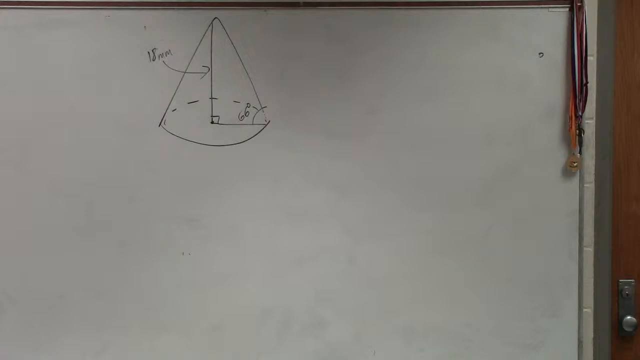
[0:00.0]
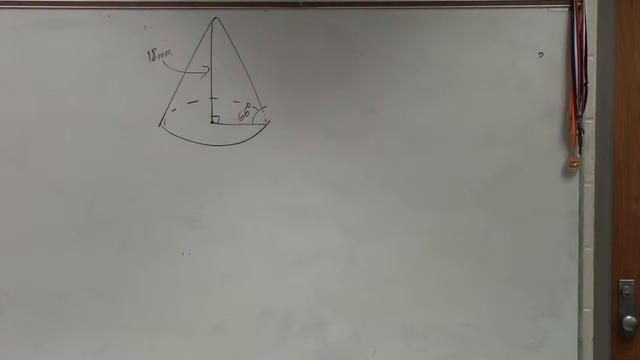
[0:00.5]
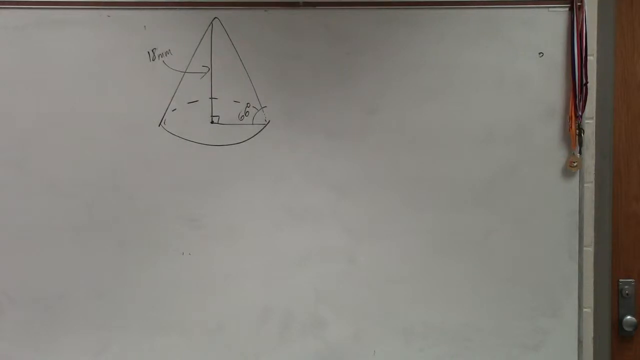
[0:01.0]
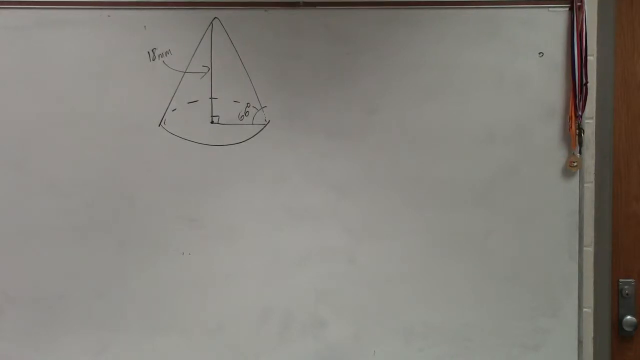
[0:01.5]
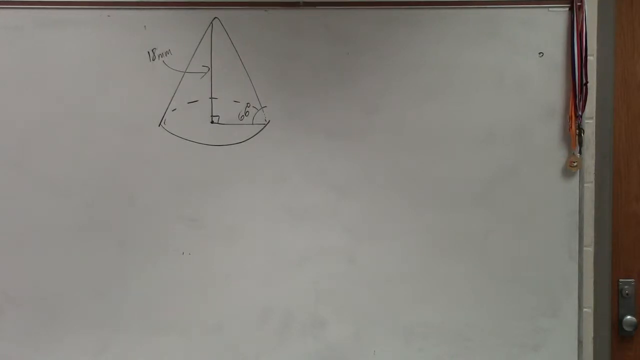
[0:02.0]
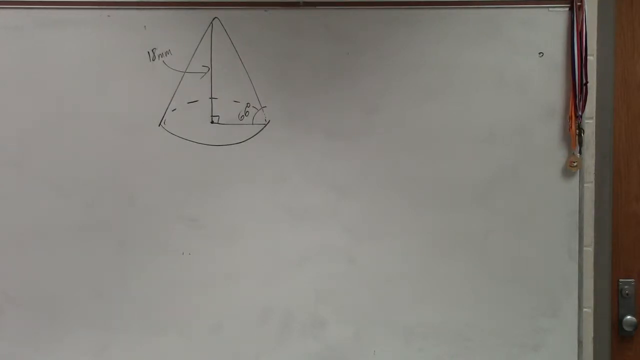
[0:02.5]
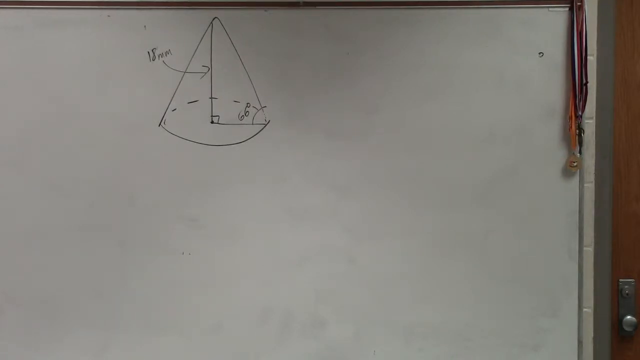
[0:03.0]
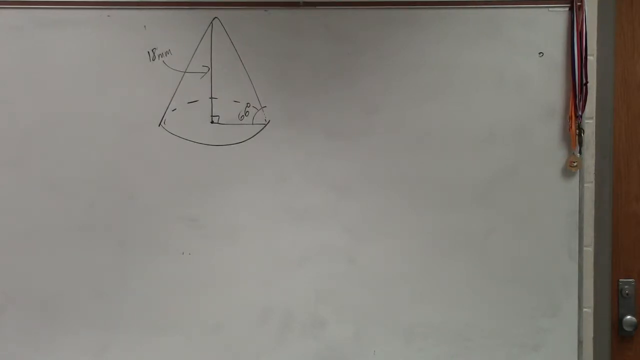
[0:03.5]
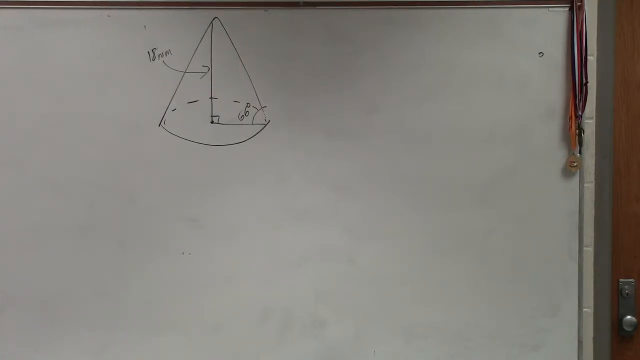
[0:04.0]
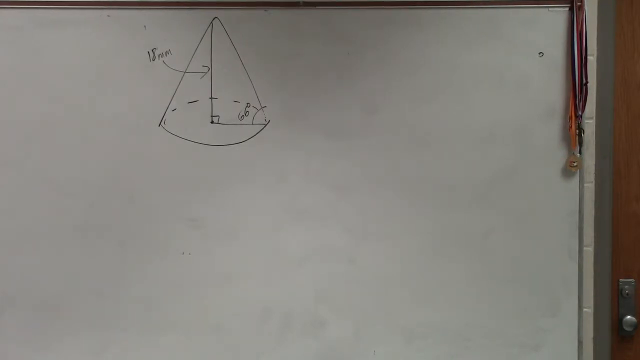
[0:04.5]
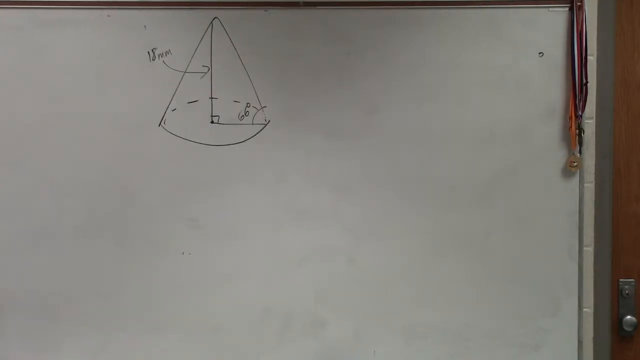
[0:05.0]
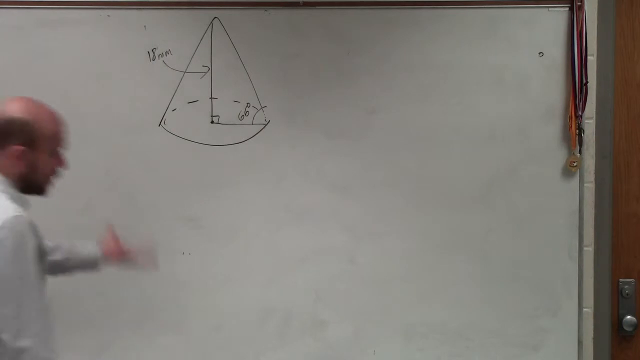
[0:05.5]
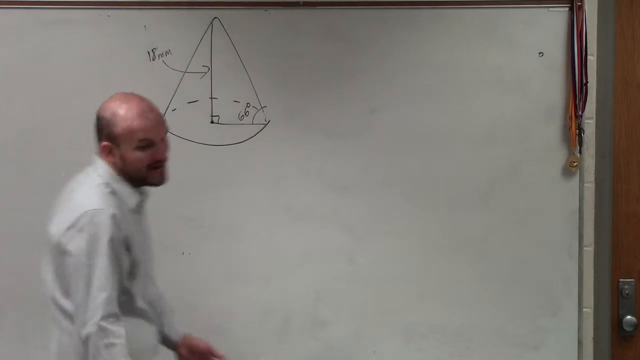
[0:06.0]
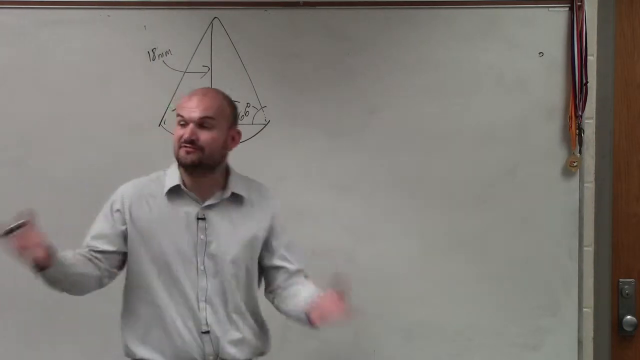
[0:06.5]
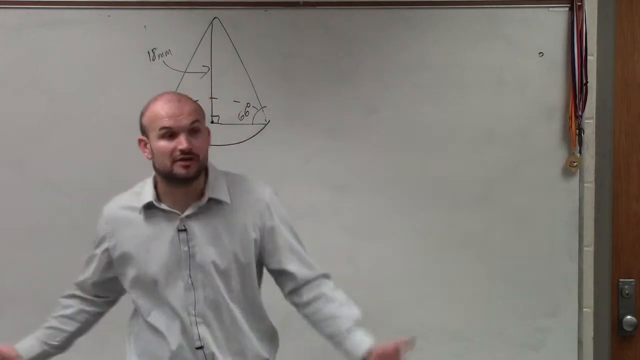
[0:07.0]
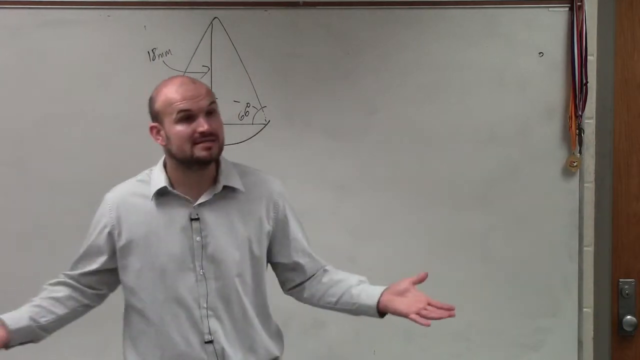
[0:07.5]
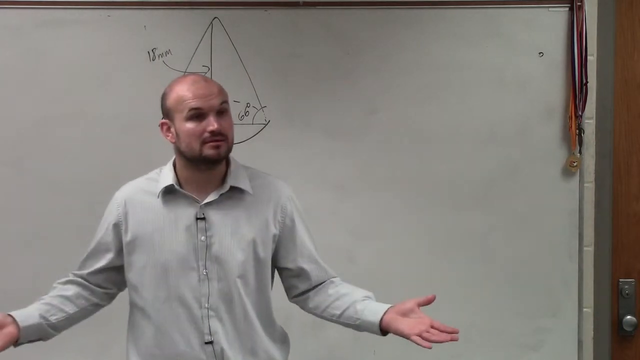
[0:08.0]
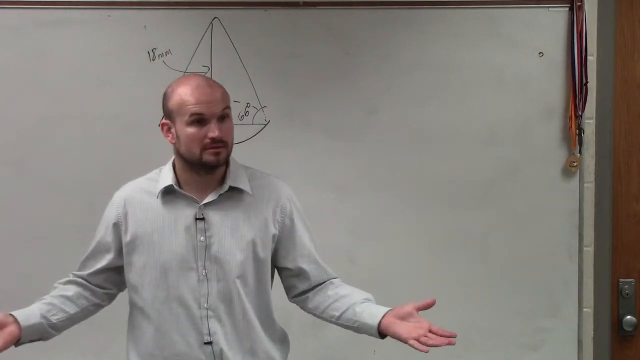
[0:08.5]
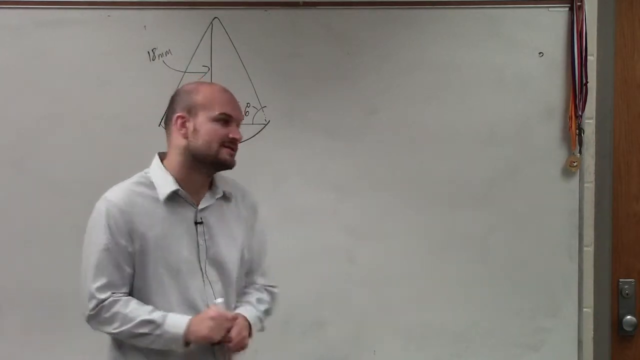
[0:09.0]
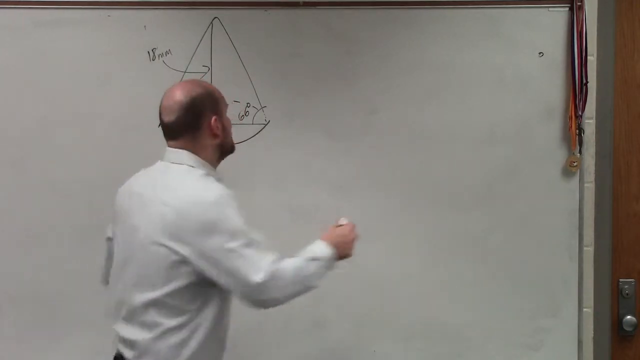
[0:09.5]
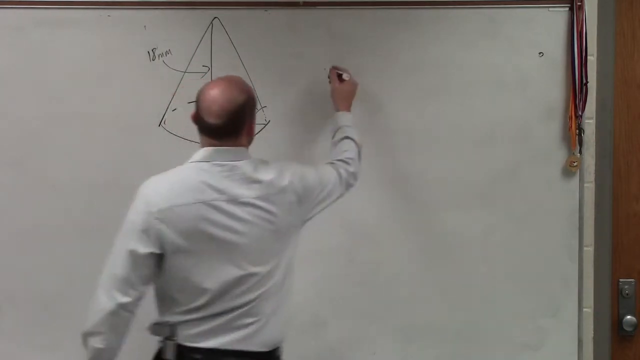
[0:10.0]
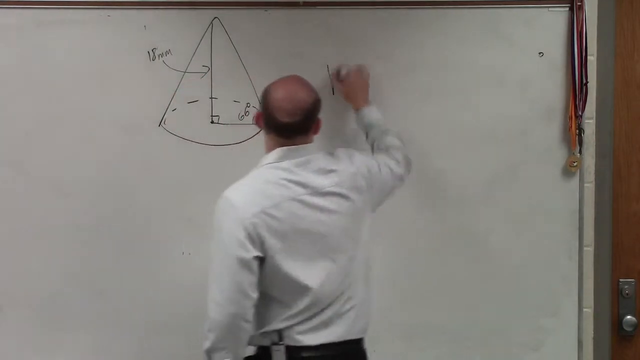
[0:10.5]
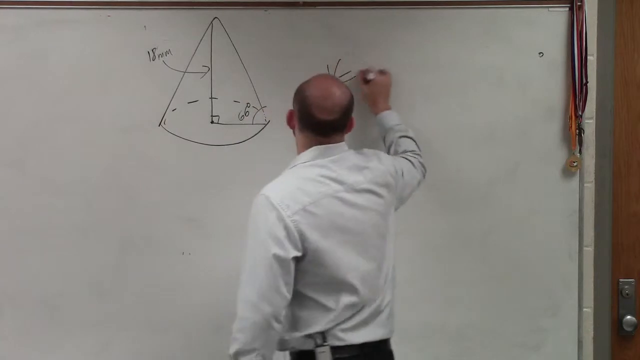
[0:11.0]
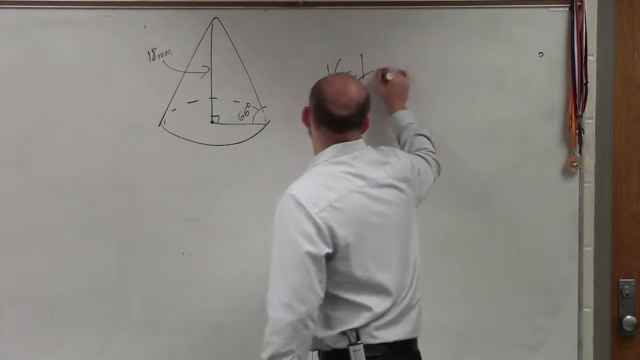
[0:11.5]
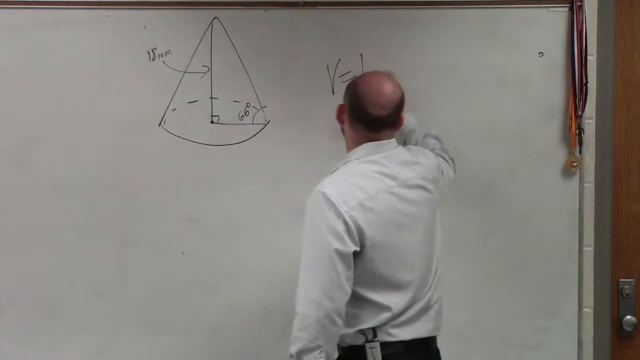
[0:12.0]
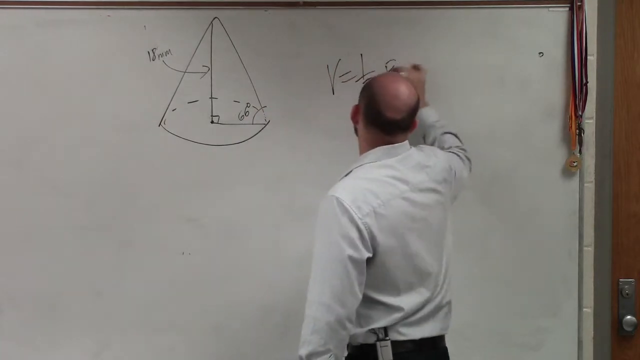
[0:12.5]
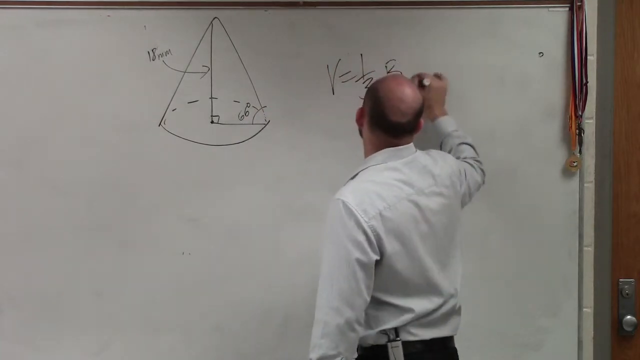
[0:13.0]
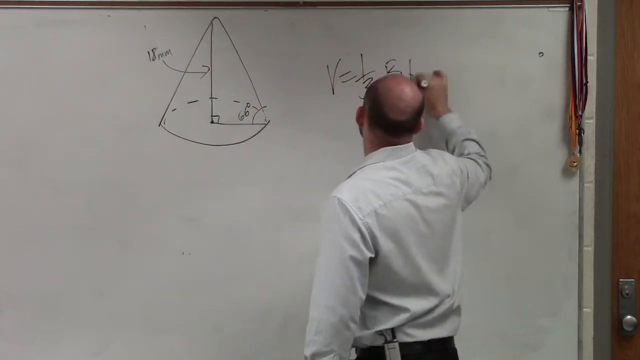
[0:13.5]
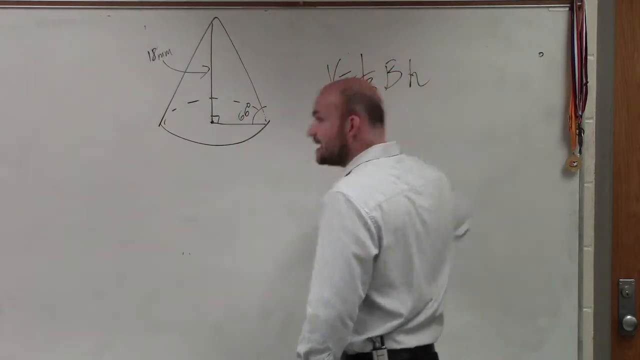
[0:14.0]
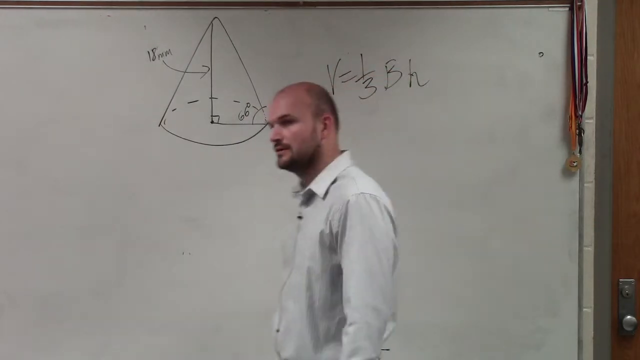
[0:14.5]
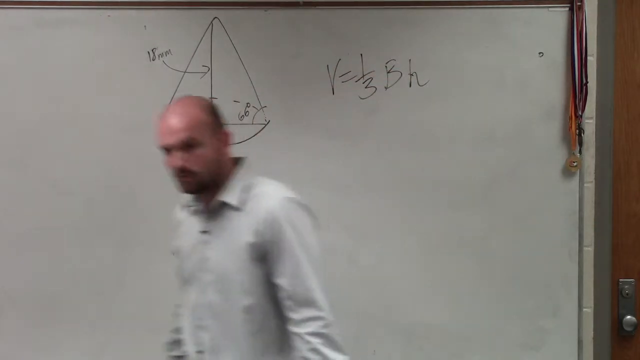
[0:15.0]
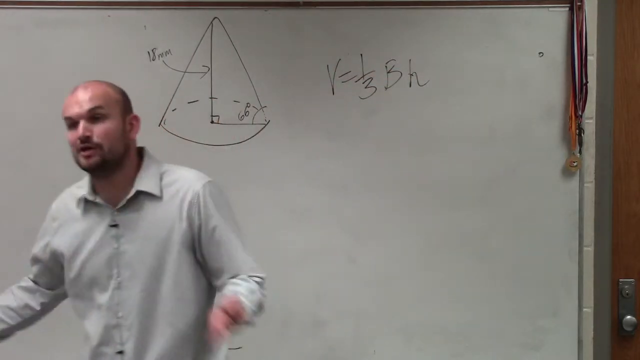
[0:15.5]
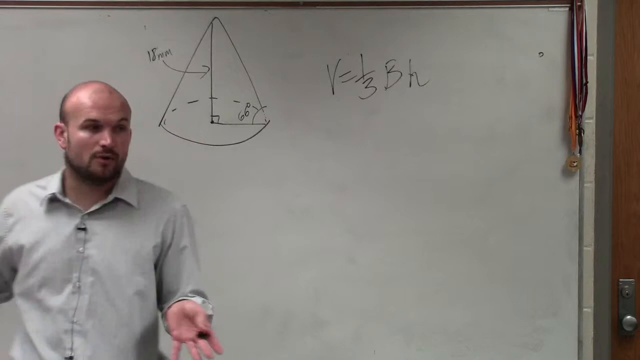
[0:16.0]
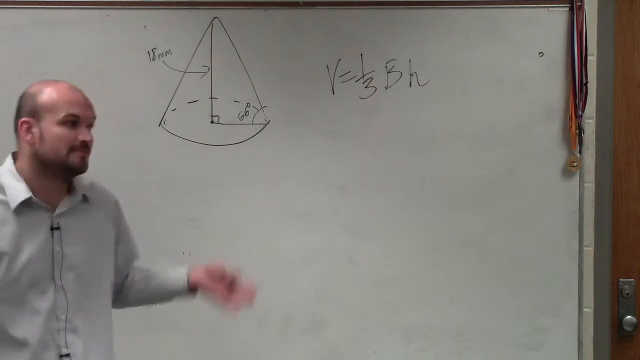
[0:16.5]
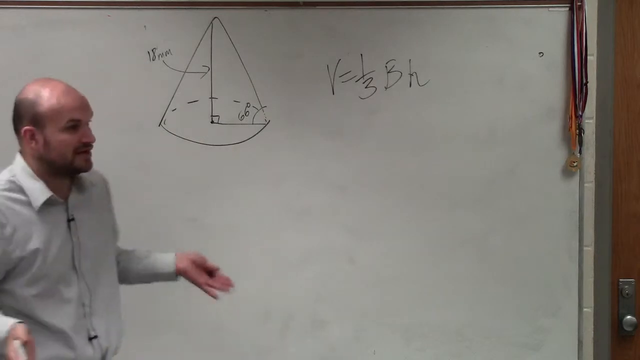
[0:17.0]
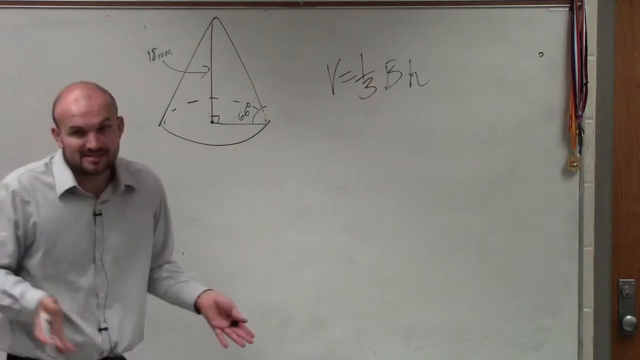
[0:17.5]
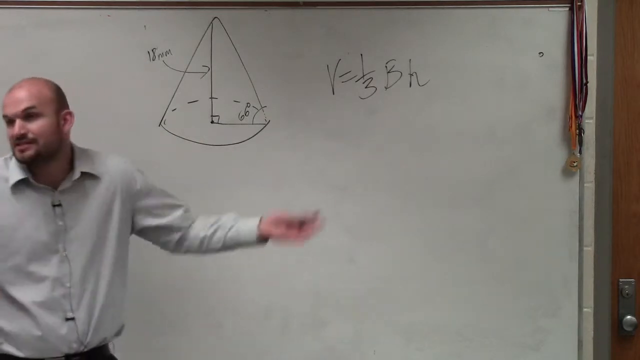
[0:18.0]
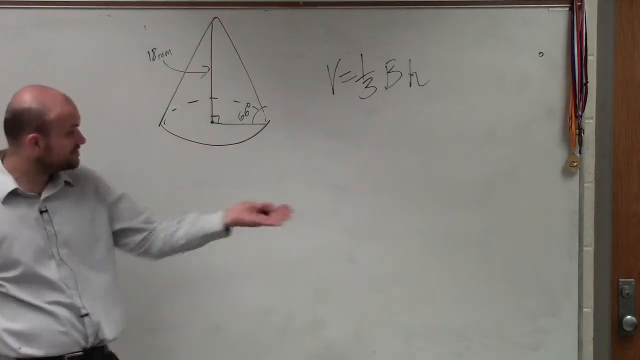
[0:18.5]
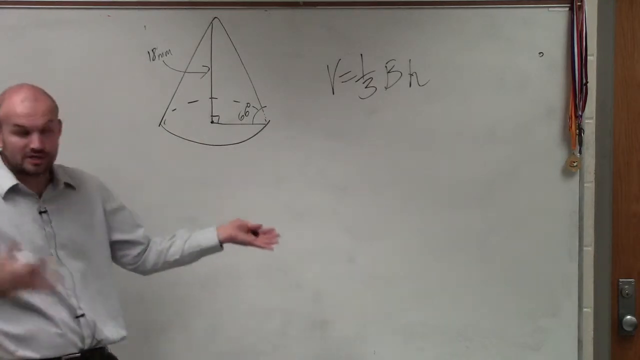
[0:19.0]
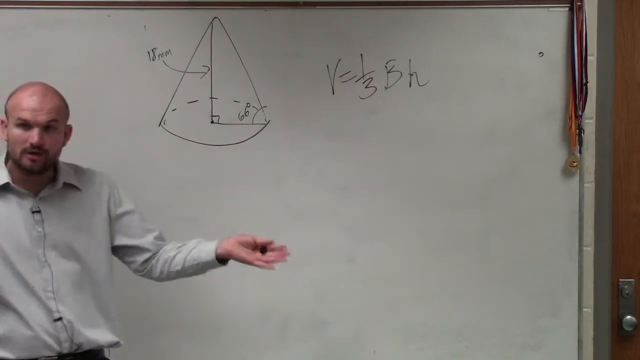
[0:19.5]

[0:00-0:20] The setting appears to be a classroom. One man, apparently the teacher, stands at the front of the room in front of a very large whiteboard. At the very beginning he faces the classroom and gestures with both arms out toward it, palms facing out toward the room, until he gestures toward the whiteboard. On the whiteboard is what appears to be a triangle with angles marked; one says 66 degrees on the right-hand side of the triangle. A line goes down the middle, with what looks like 18 there, and the drawing now looks like a cone with a right angle. Using what appears to be a black marker, he writes an equation beginning "b equals one over three" on the whiteboard, next to what now appears to be a cone drawn on the board. He is the only person visible. He turns away from the board to face the classroom, holding the marker in his right hand and gesturing with his left hand toward what he has just written on the whiteboard. At the very end he turns around and makes a gesture as though he is going to write on the board again. The man looks to be in his 30s; he is balding, has brown hair, appears to be Caucasian, and seems to have a beard, goatee and mustache. Two ribbons hang over the edge at the right-hand corner of the whiteboard. In the far right of the frame is a door: a gray door jamb, a white concrete wall next to it, and a brown door with a gray or silver doorknob with a lock on it.